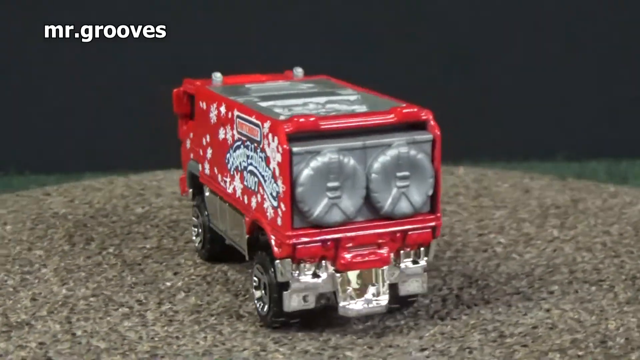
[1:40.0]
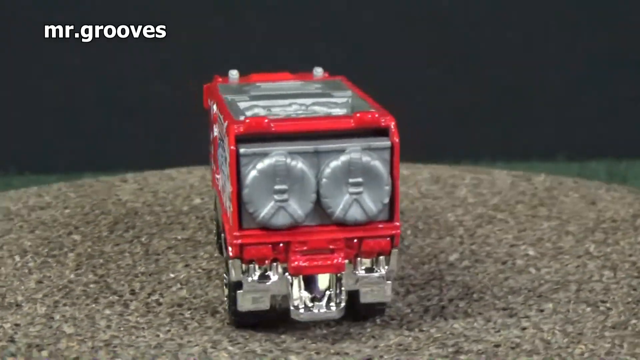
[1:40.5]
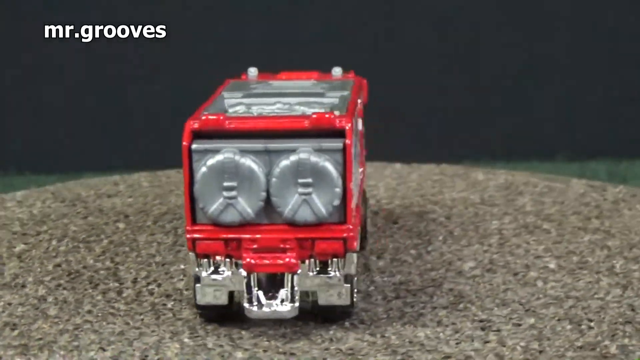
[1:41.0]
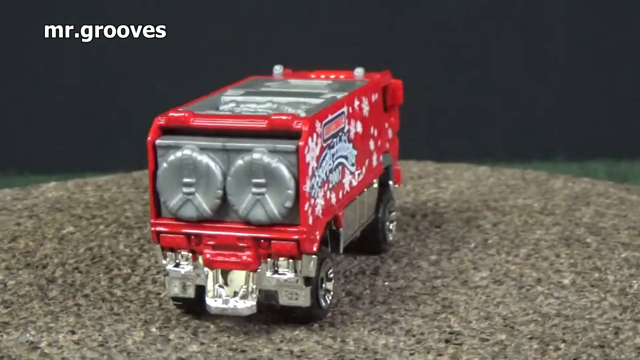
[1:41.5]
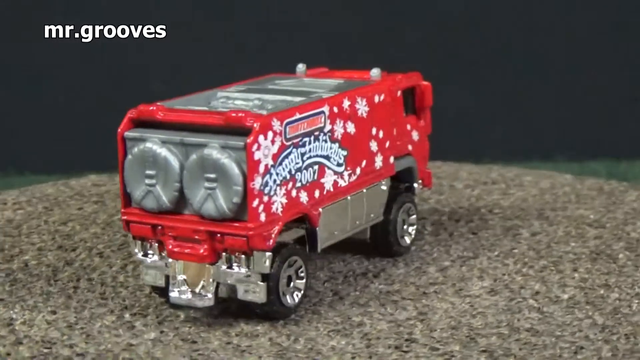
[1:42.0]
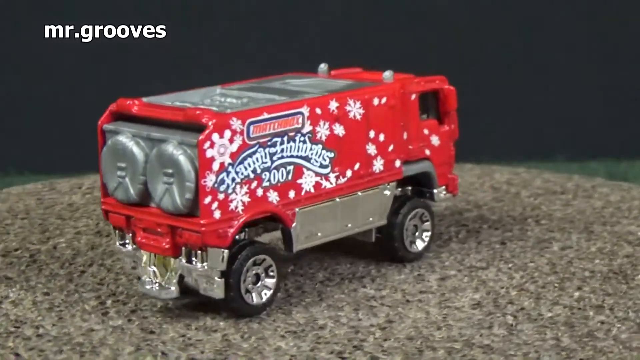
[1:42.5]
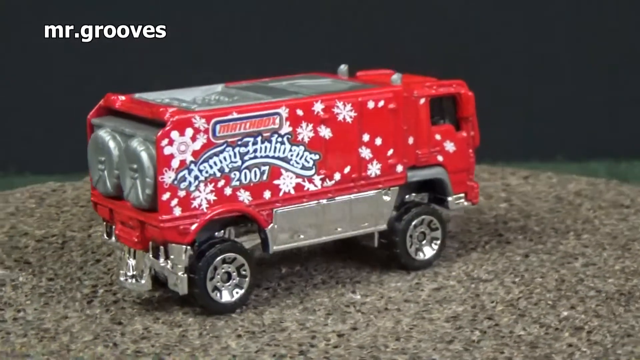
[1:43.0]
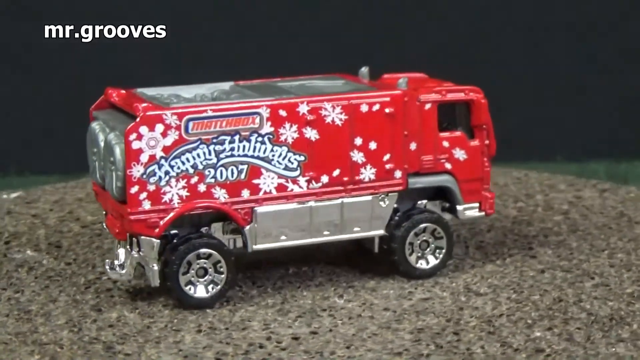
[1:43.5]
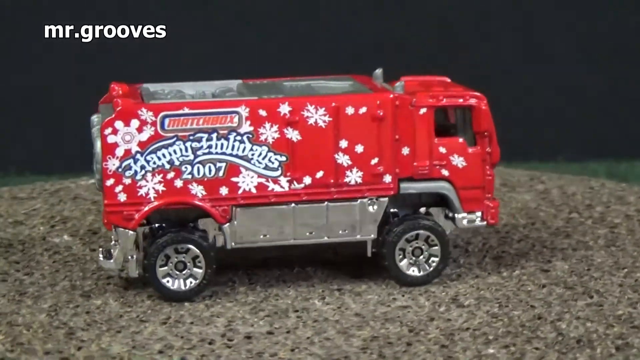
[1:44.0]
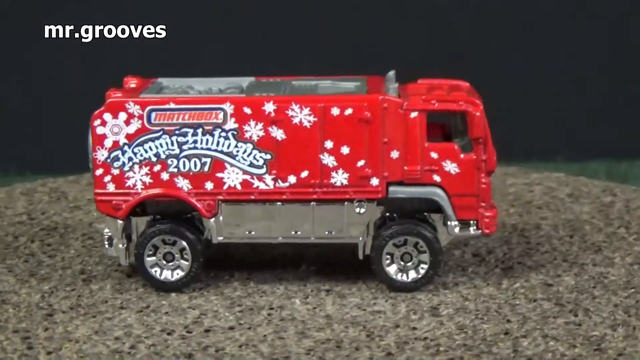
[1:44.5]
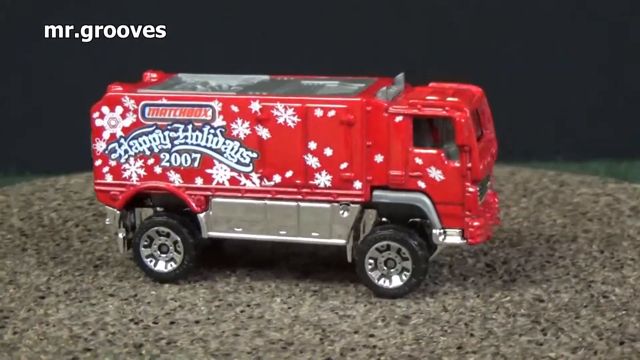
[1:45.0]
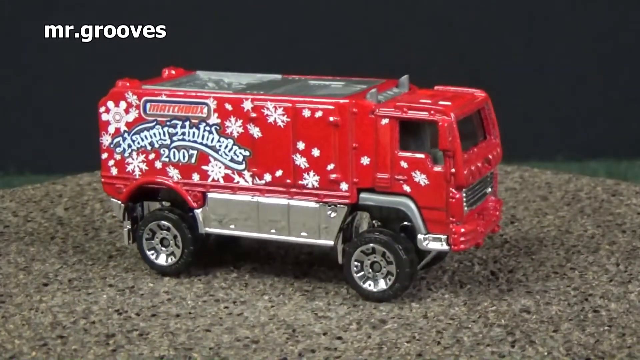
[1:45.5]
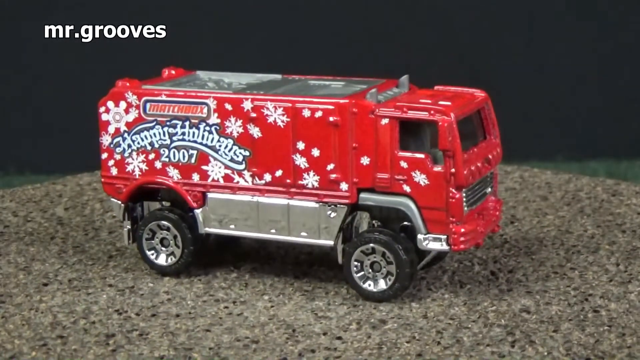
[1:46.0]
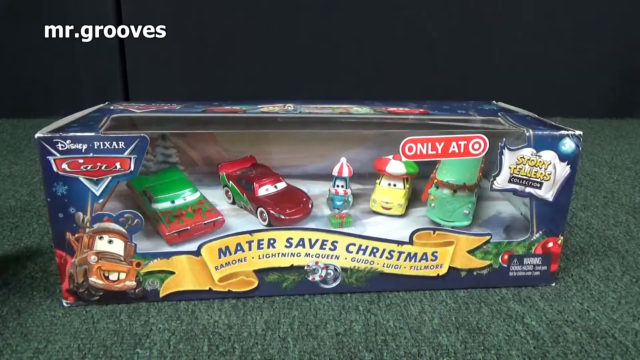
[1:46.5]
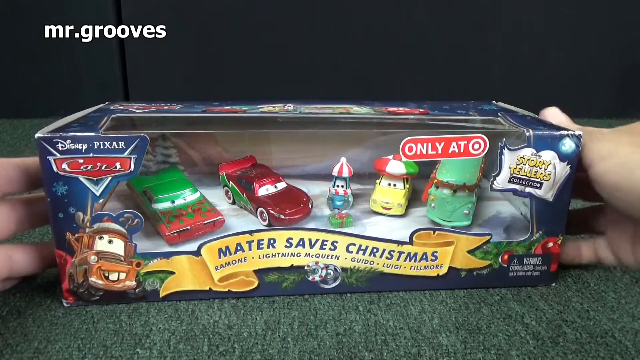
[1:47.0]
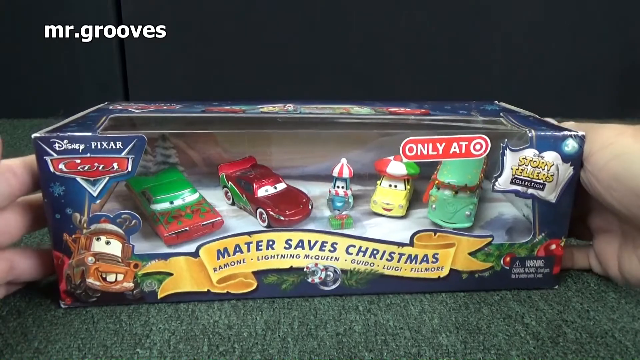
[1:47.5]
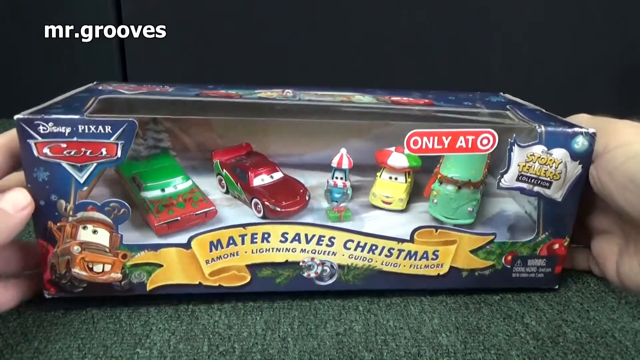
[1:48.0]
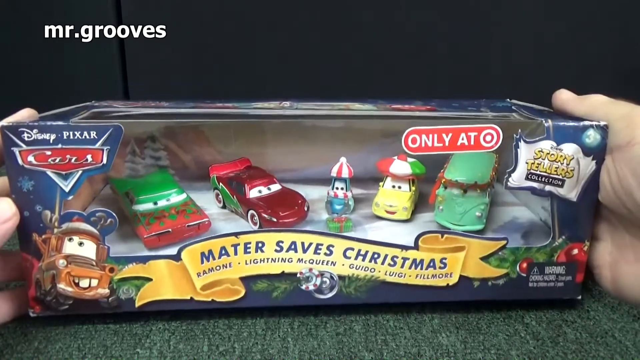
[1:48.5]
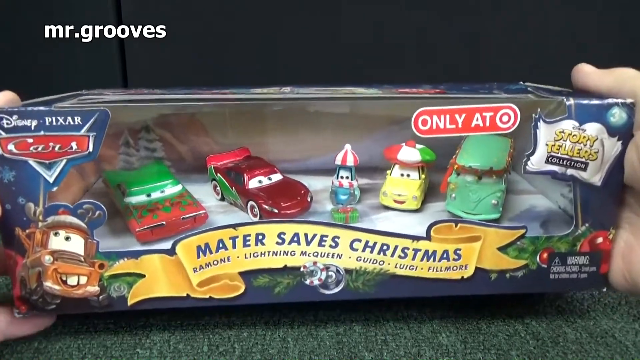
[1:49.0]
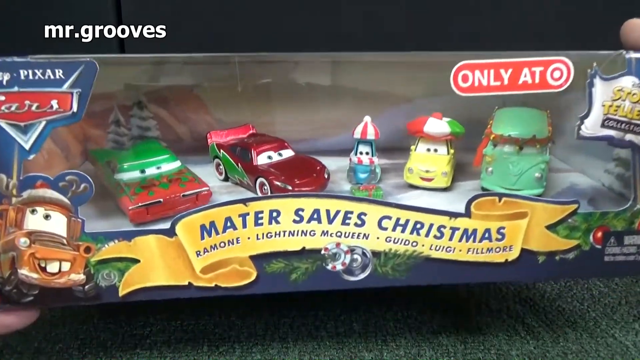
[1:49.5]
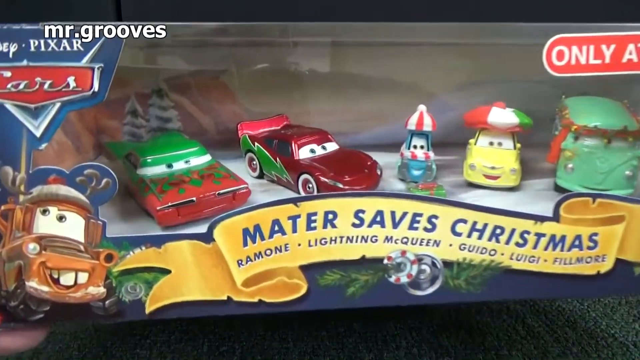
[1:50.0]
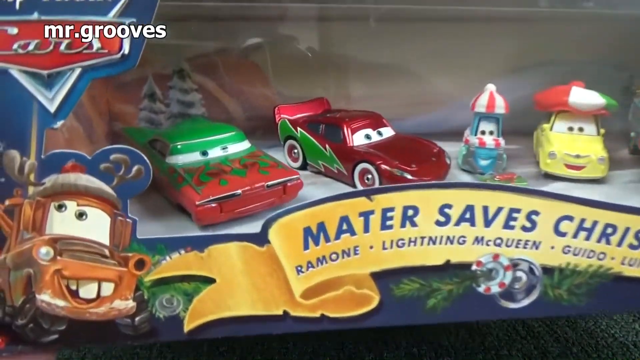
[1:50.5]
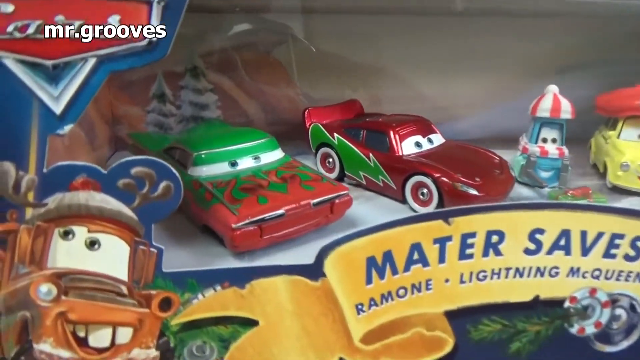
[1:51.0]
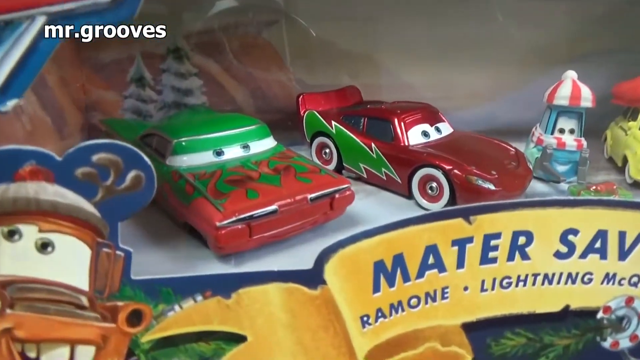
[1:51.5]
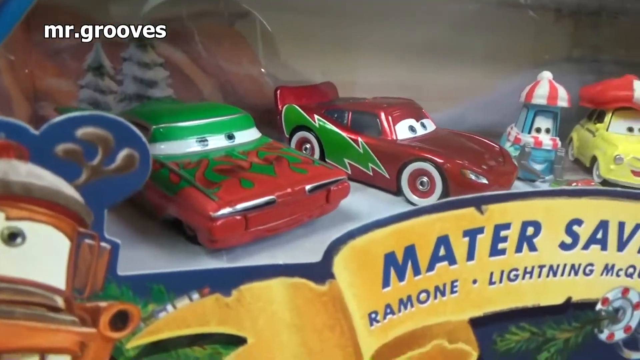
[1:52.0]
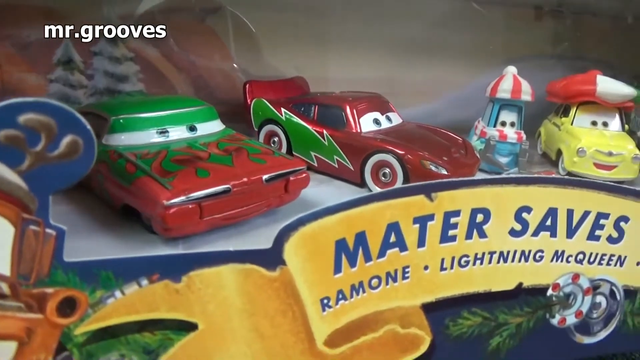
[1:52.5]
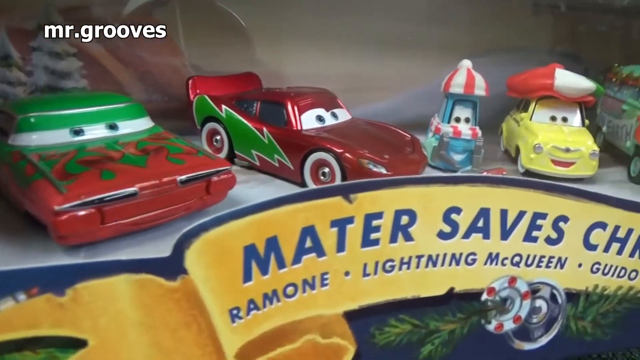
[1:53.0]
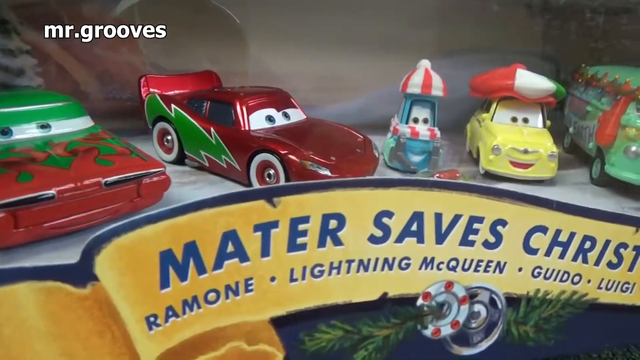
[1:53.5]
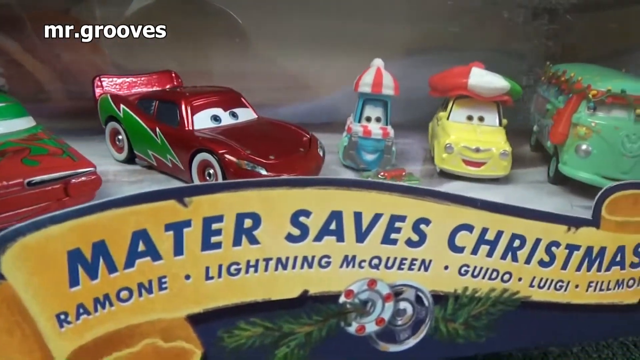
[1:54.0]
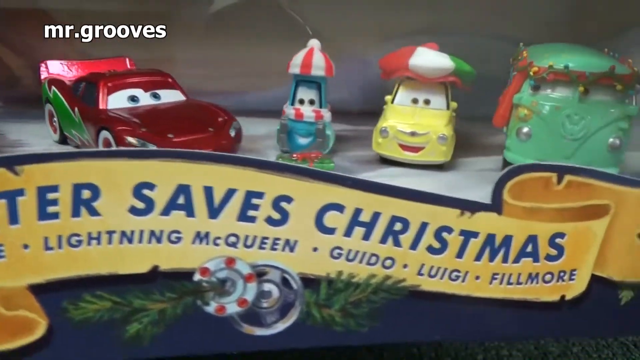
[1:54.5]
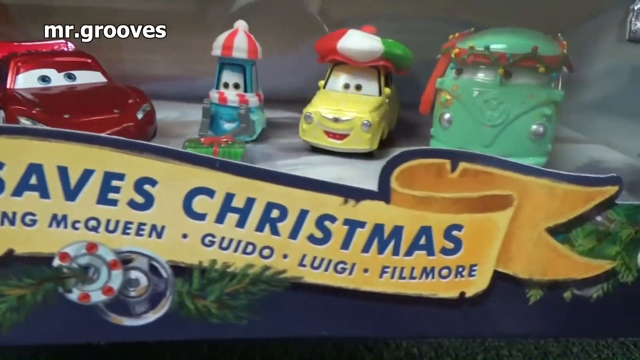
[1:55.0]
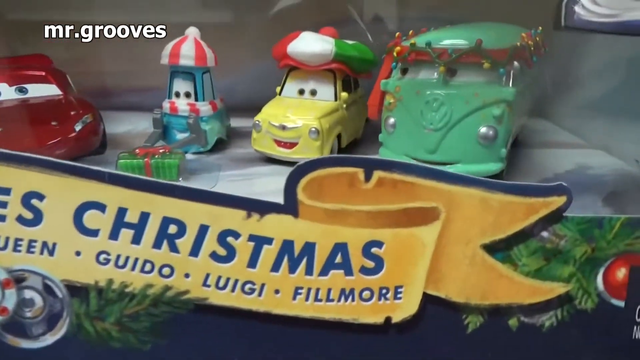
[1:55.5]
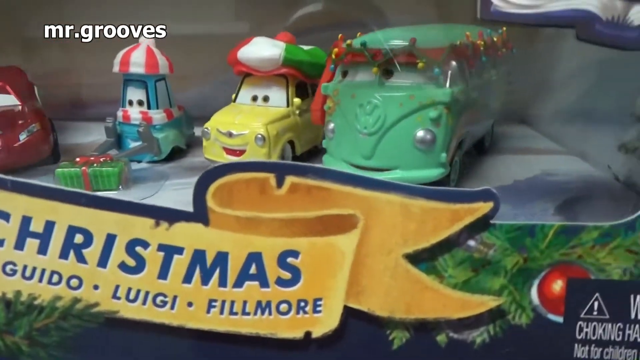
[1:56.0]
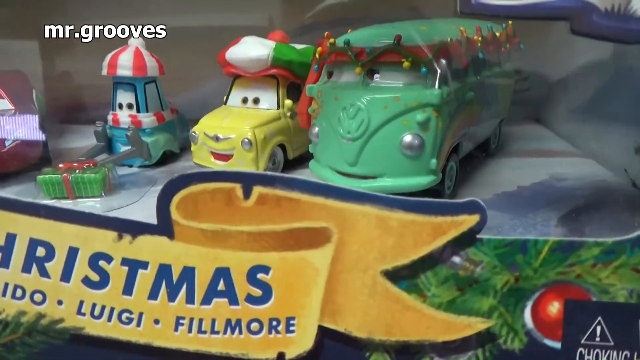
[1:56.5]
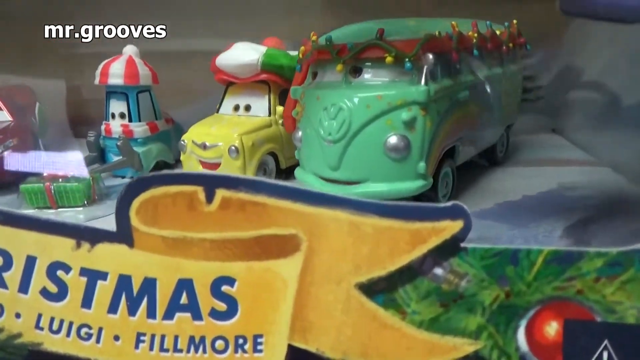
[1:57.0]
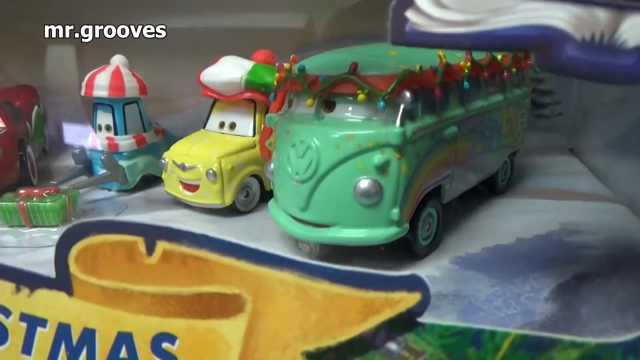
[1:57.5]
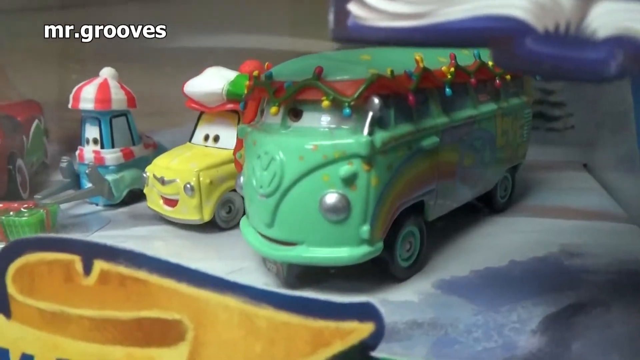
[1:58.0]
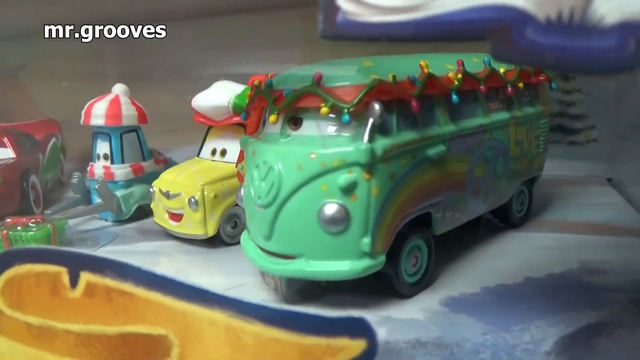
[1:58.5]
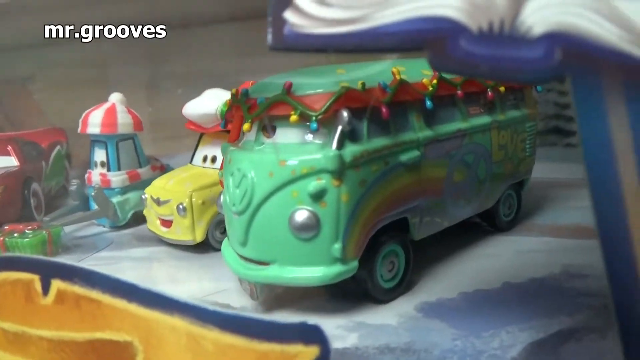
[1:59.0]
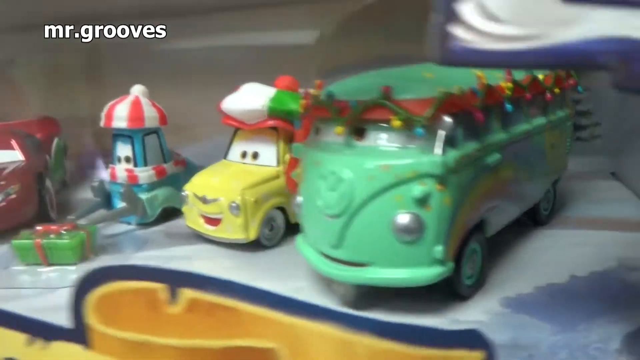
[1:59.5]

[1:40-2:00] A toy truck is displayed. It is red with white snowflakes all over it, has silver accents on its bumper and wheels, and has a blue Hot Wheels logo on its side. The truck is sitting on a gray surface that looks like gravel. On the side of the truck, "Happy Holidays 2007" is written in white text with a blue border. Hands then take another package with different cars inside. The package says "Meta saves Christmas" in a yellow banner. The cars are zoomed in on, and the package shows that the cars are only sold at Target. The packaging shows different cars with eyes and different designs. The top of the packaging shows the cars laughing, and there is also a bus.